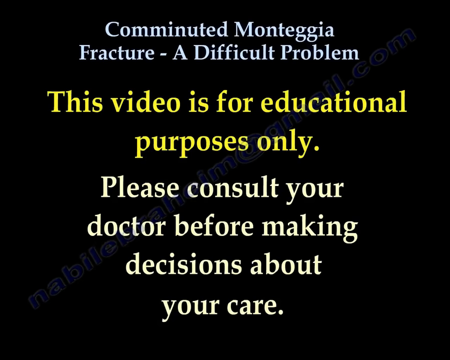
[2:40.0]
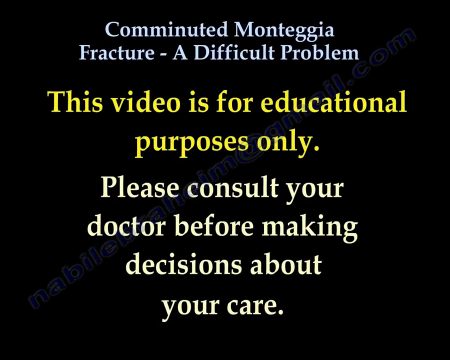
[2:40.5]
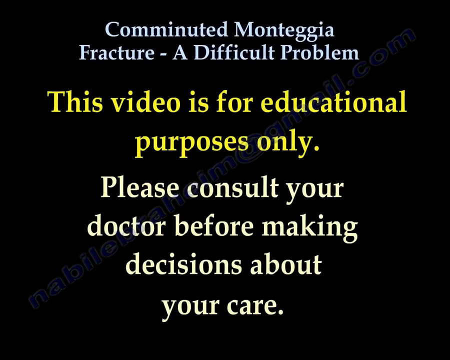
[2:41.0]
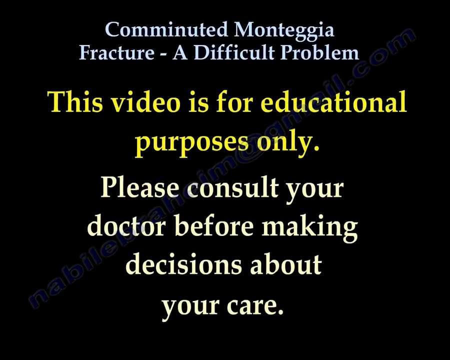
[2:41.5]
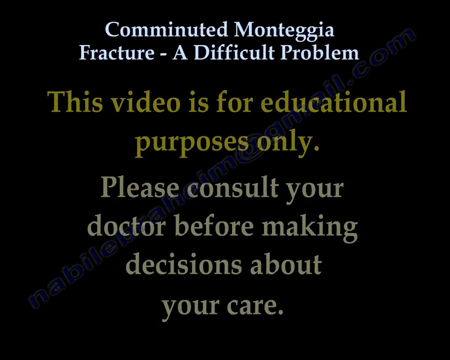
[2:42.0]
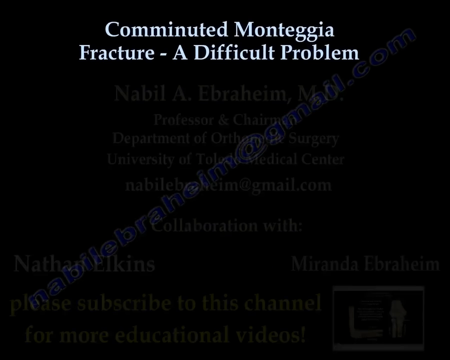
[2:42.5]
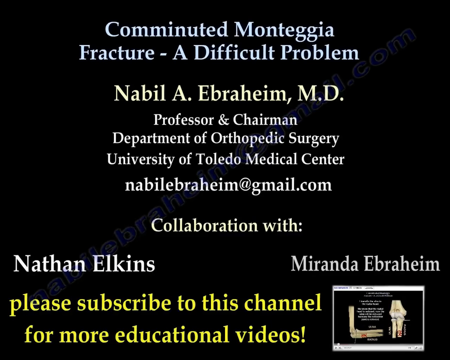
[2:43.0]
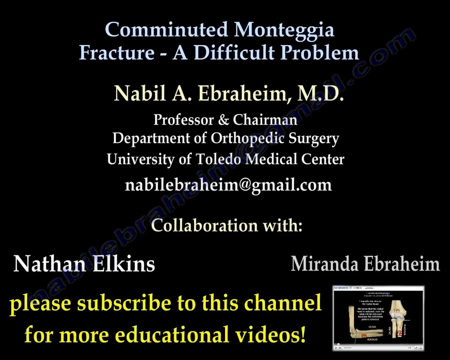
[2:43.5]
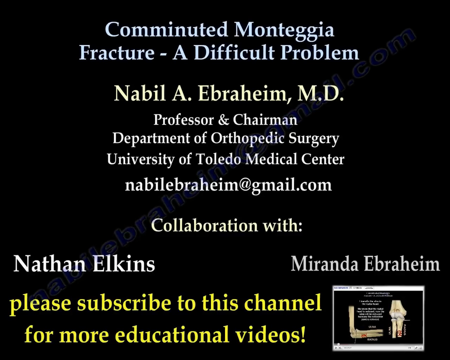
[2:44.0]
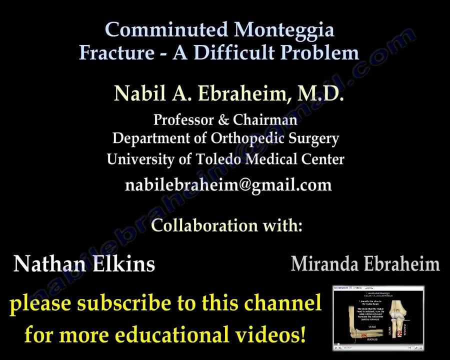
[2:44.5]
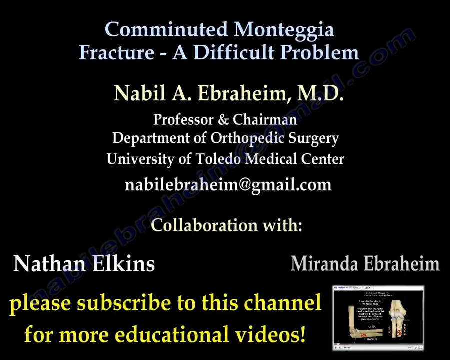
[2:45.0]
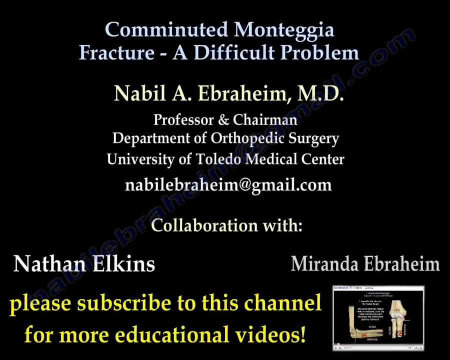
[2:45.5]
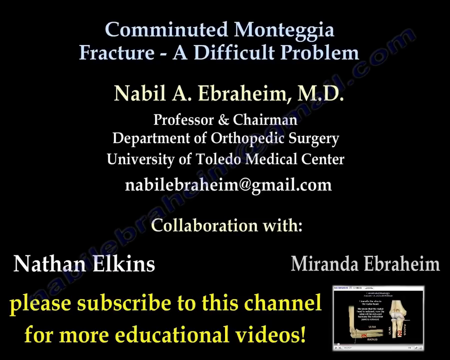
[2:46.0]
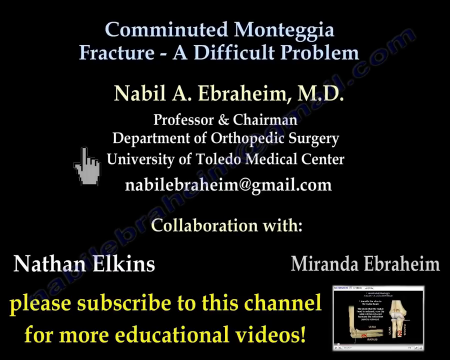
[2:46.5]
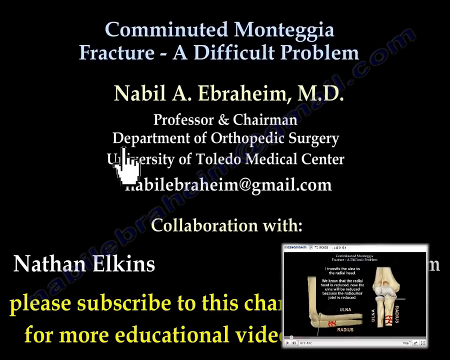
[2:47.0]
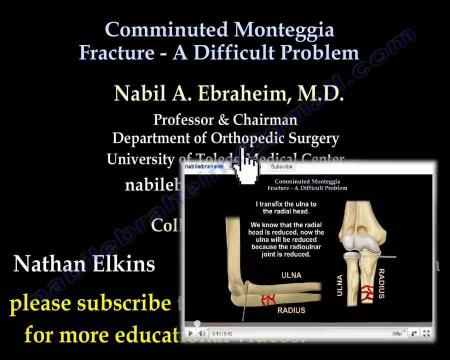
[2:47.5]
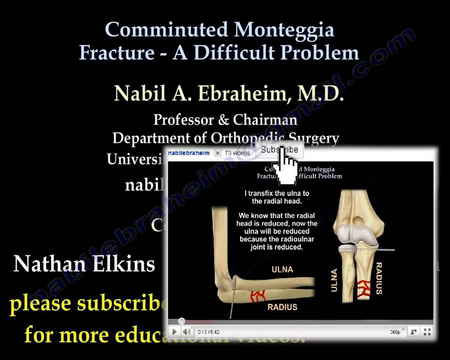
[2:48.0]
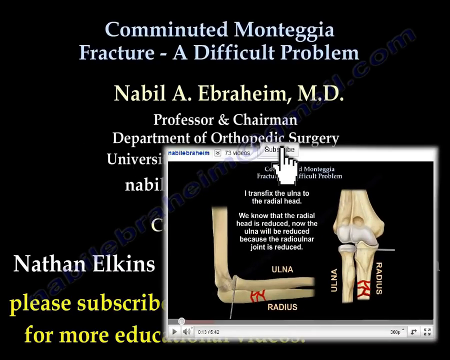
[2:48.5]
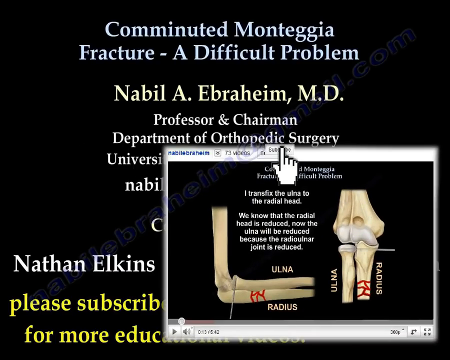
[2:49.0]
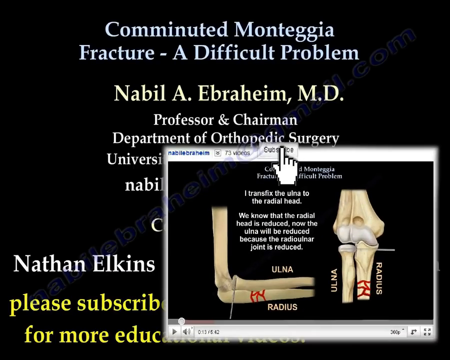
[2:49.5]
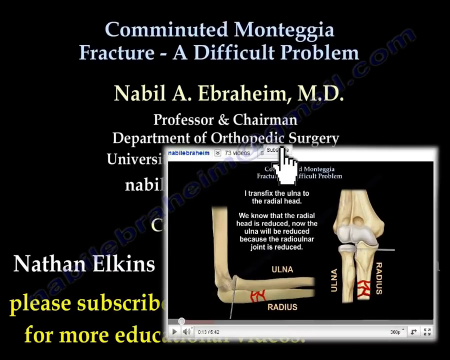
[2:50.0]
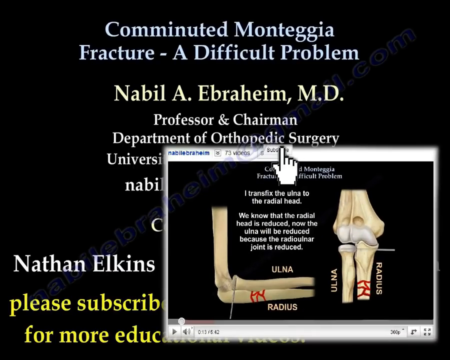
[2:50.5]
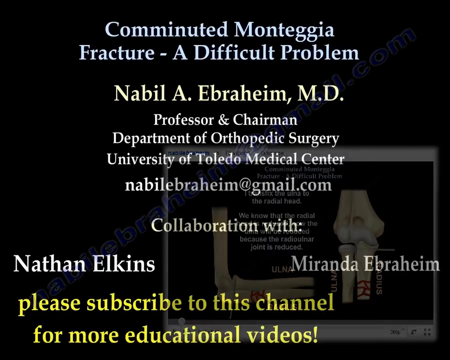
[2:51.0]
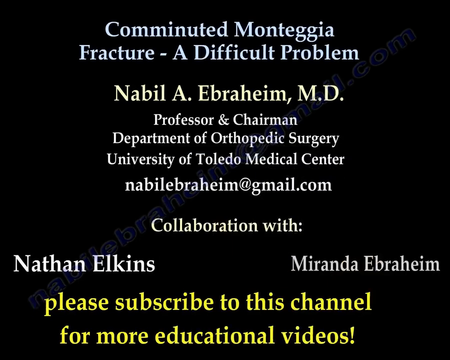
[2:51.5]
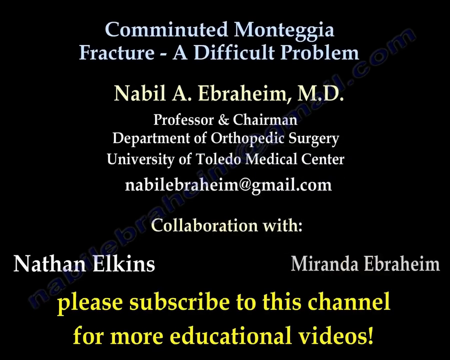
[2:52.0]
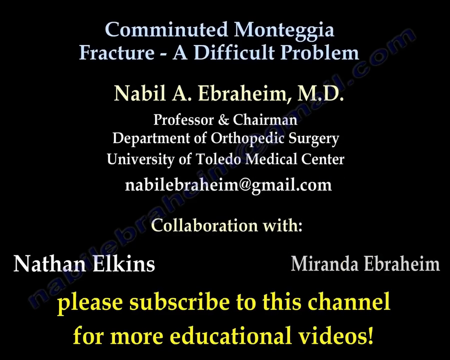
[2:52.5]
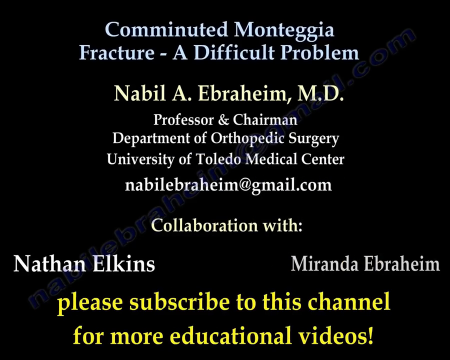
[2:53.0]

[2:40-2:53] On a black screen, the main heading about the comminuted Monteggia fracture, which has been present throughout, is still at the top. Below it is the name "Nabil A. Ebrahim, MD", then in white font "Professor and Chairman", then "Department of Orthopaedic Surgery", and on a new line "University of Toledo Medical Center". Beside that is a white graphic of a hand with the forefinger pointing upwards, the thumb out slightly and the other three fingers bent over. Beside that is the email address nabilbrahim@gmail.com. Below that is "collaboration with", and on a separate line below, "Nathan Elkins" on the left-hand side and "Miranda Ebrahim" on the right-hand side. Below that, in yellow font, is "please subscribe to this channel for more educational videos". A graphic then appears in the bottom center showing the text and graphics from the video so far; it moves to one side, and the text says "this video is for educational purposes only".